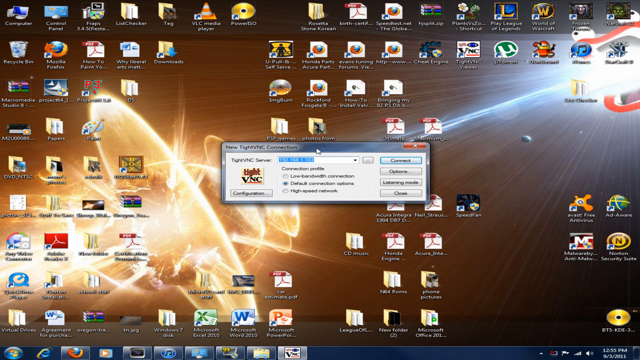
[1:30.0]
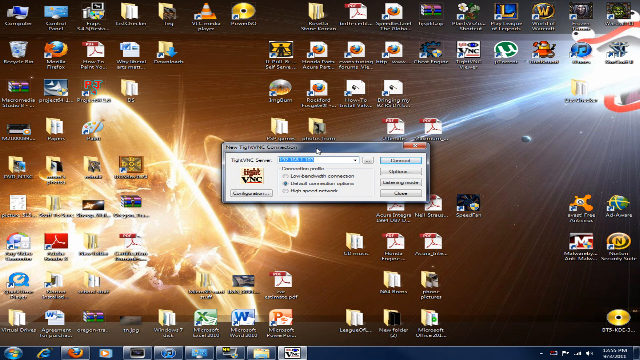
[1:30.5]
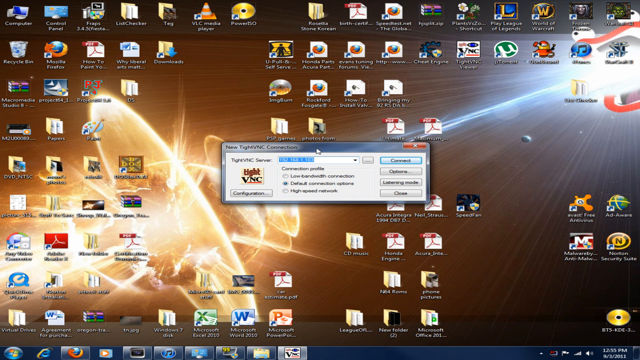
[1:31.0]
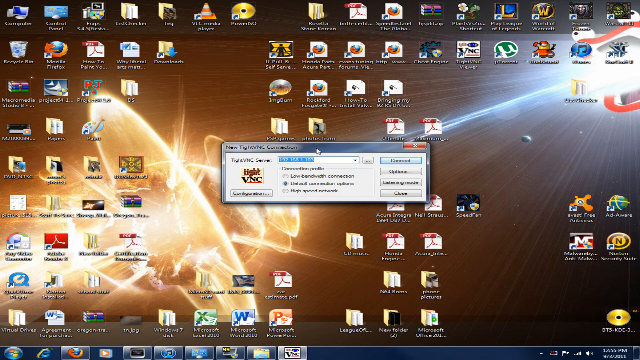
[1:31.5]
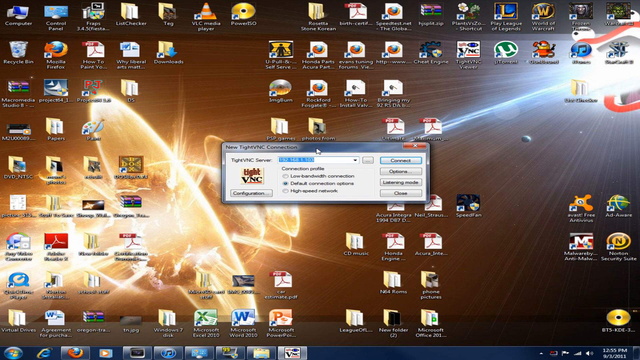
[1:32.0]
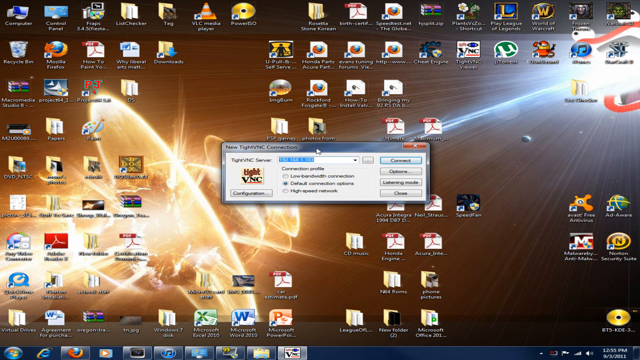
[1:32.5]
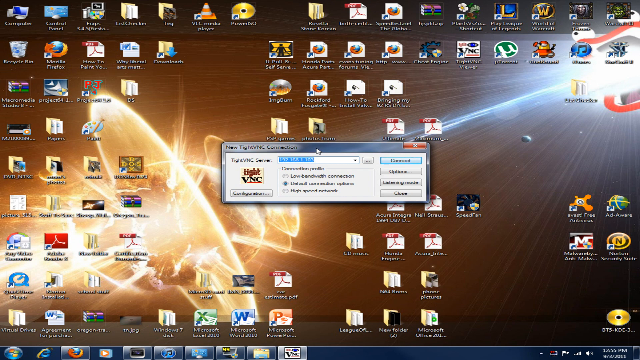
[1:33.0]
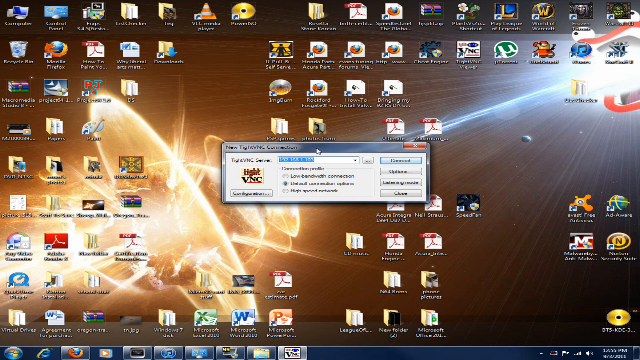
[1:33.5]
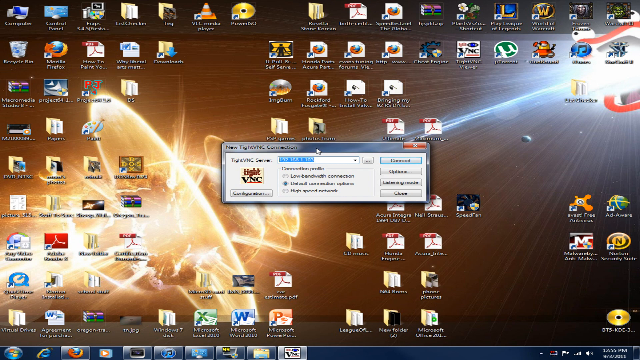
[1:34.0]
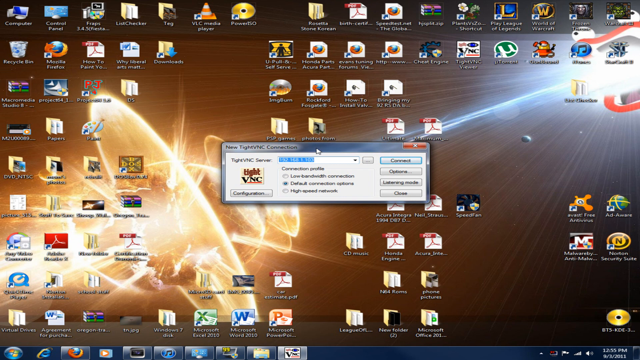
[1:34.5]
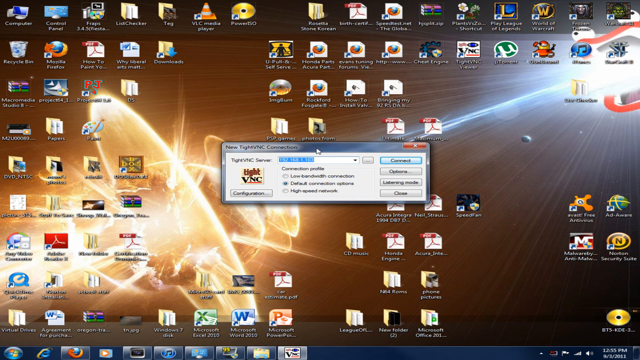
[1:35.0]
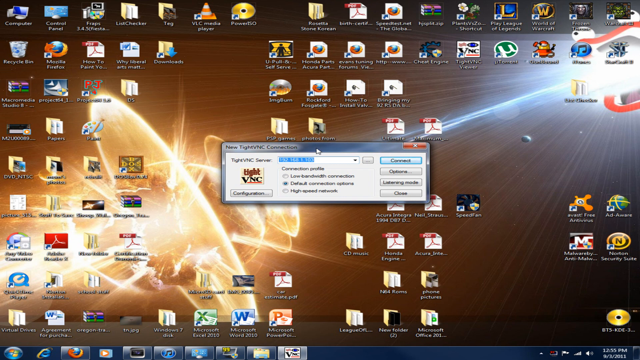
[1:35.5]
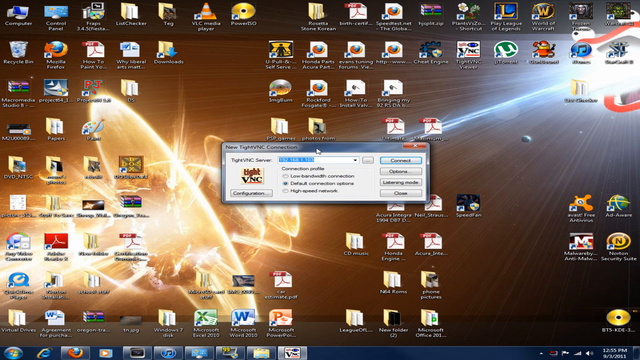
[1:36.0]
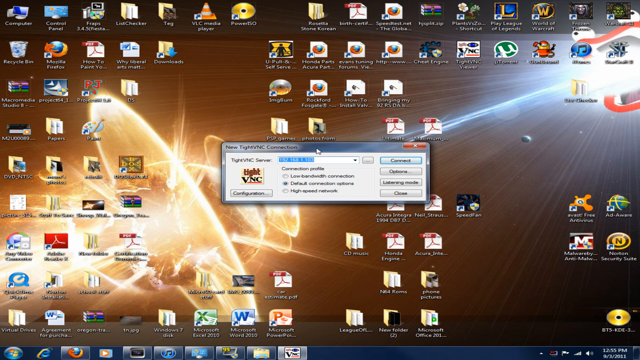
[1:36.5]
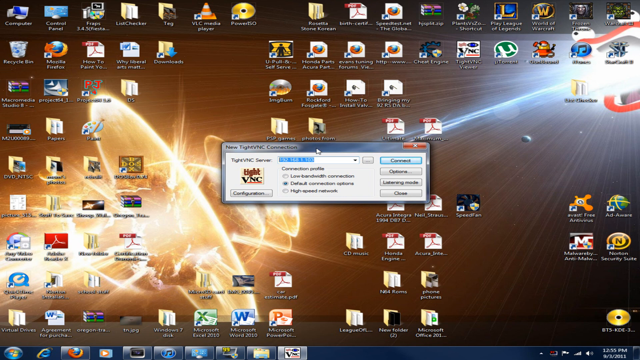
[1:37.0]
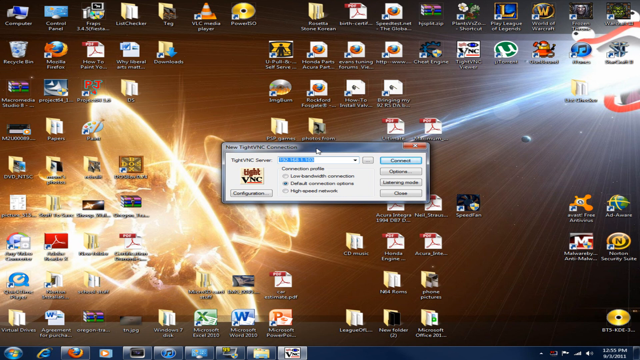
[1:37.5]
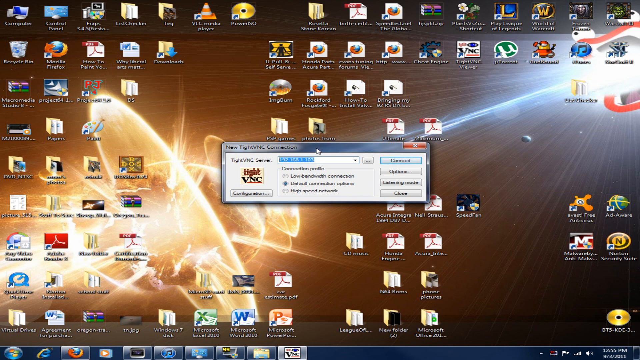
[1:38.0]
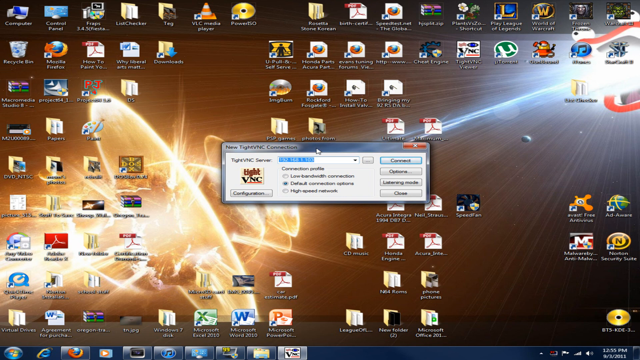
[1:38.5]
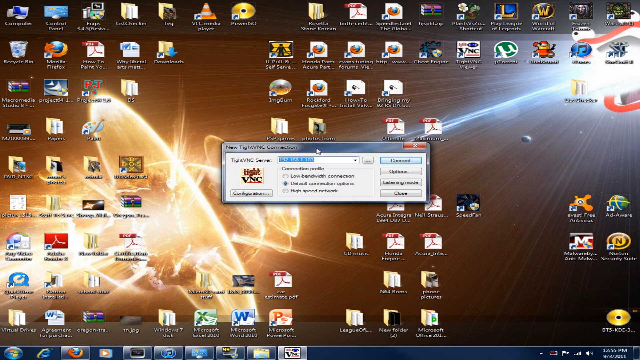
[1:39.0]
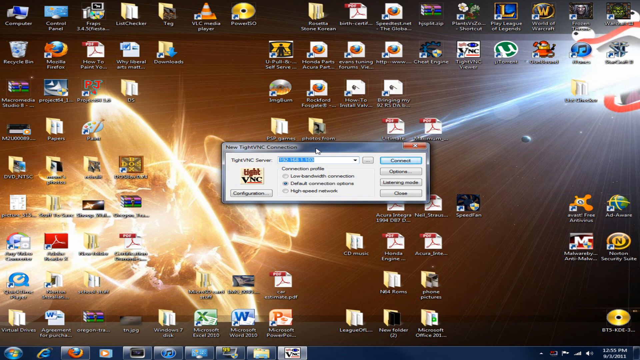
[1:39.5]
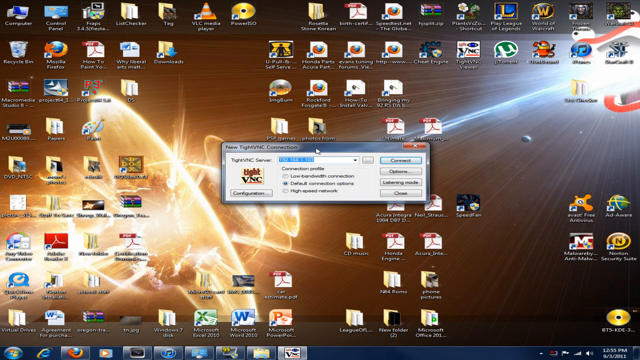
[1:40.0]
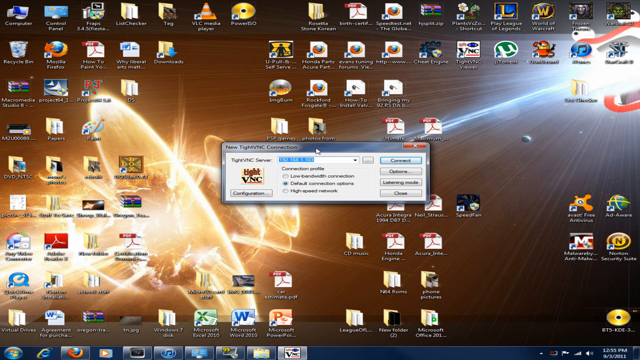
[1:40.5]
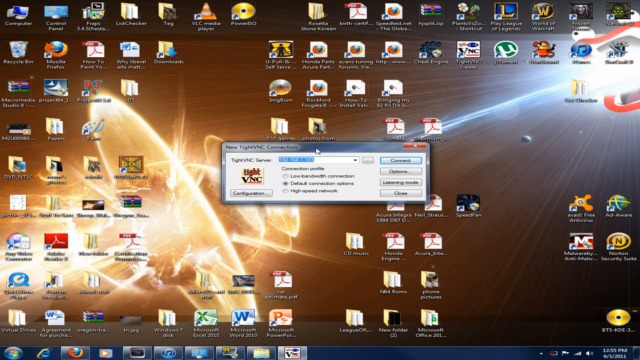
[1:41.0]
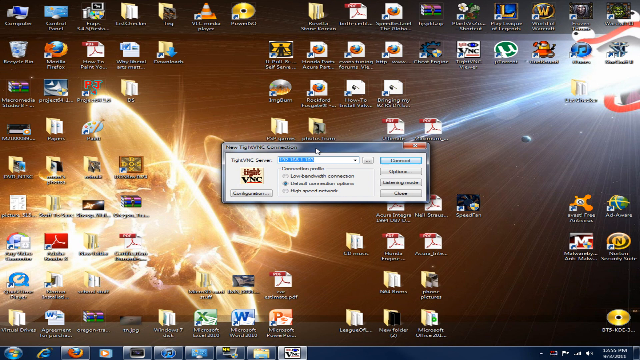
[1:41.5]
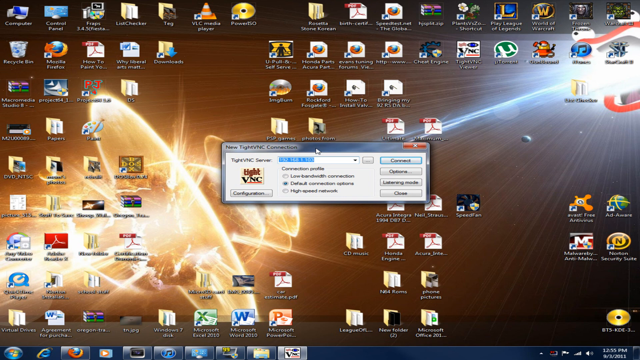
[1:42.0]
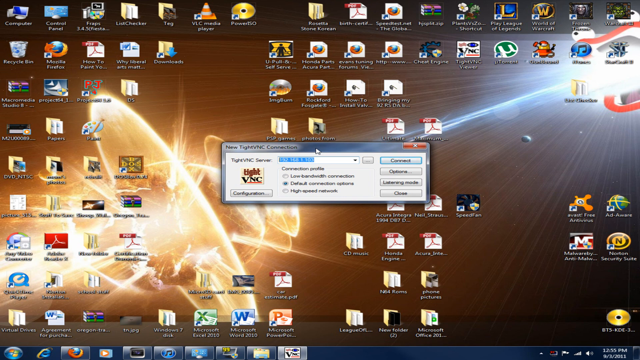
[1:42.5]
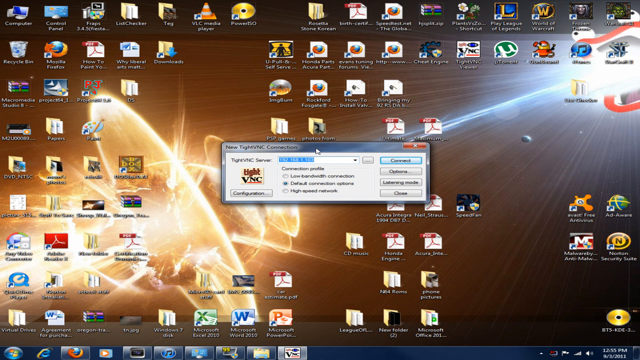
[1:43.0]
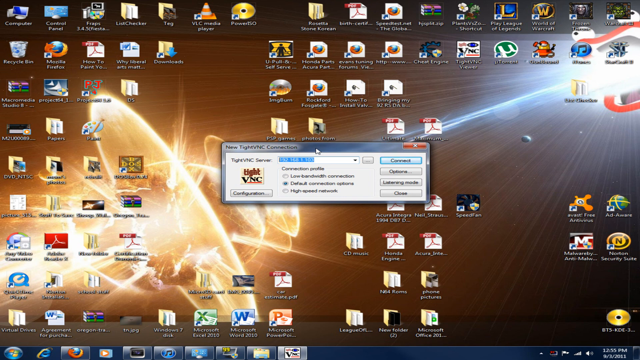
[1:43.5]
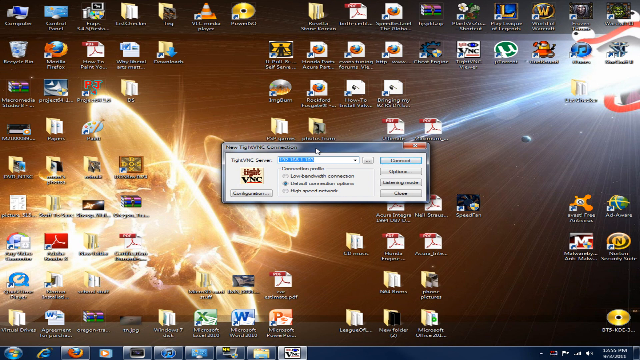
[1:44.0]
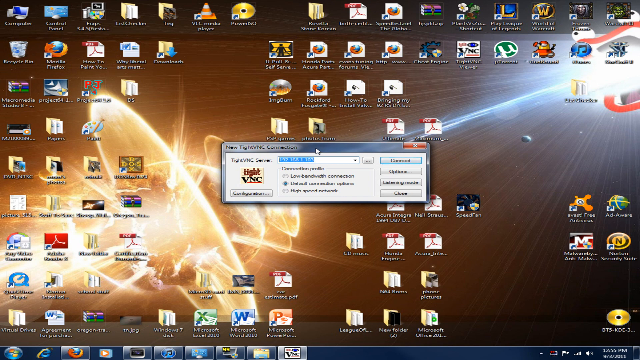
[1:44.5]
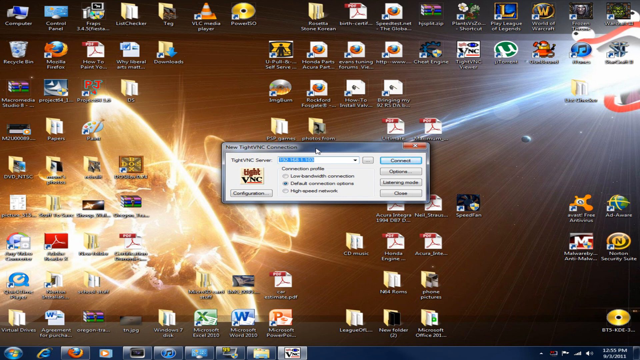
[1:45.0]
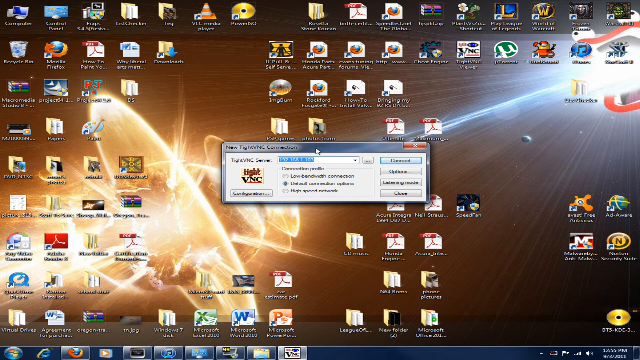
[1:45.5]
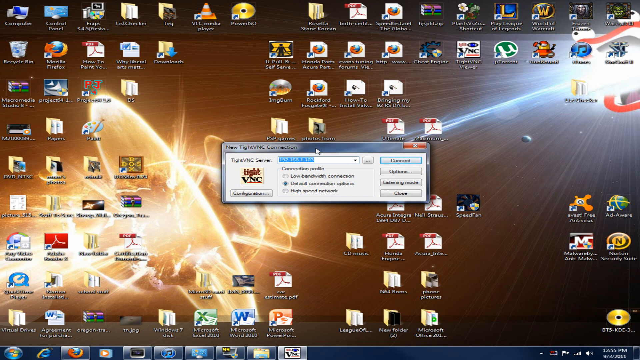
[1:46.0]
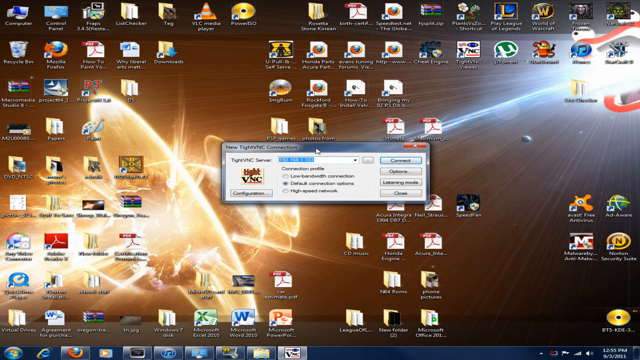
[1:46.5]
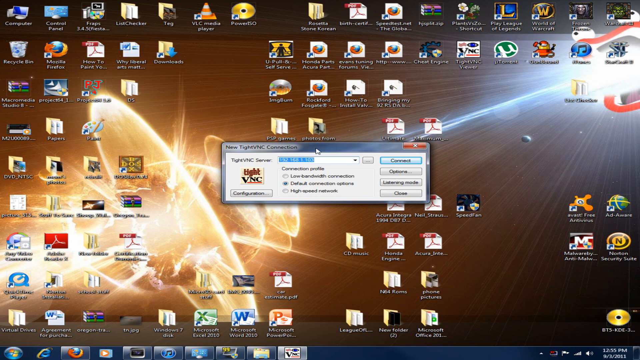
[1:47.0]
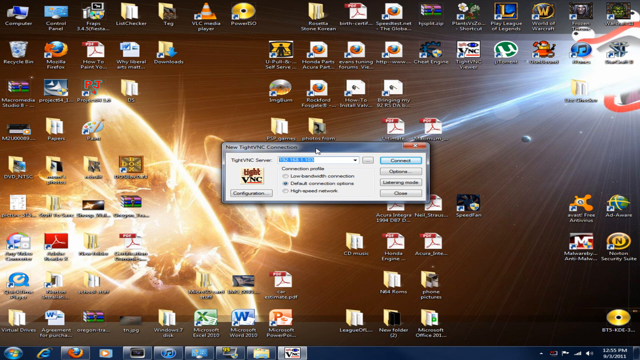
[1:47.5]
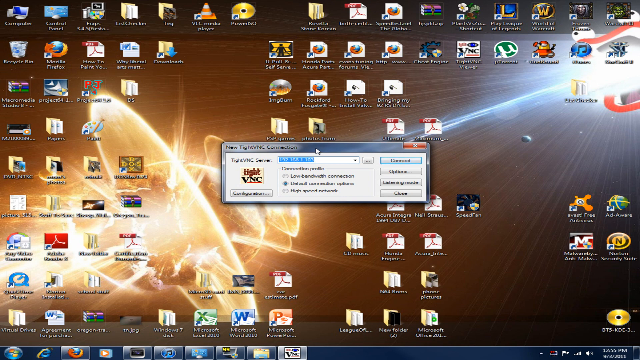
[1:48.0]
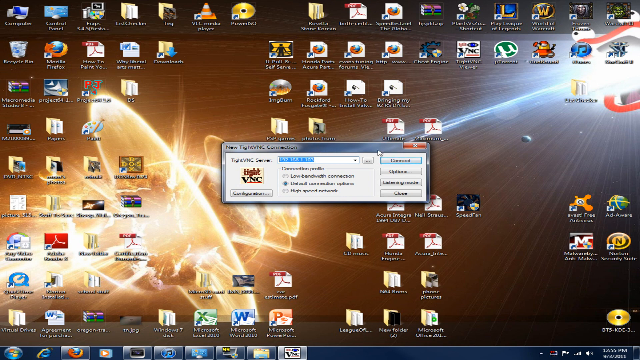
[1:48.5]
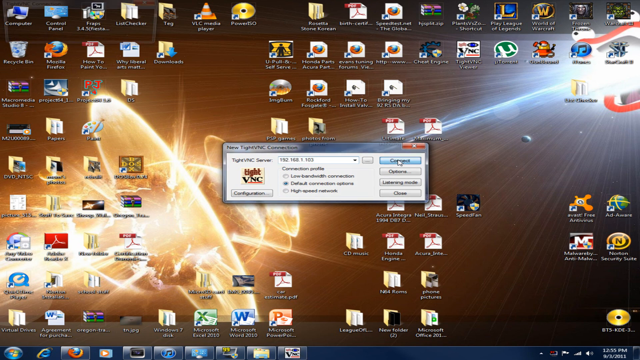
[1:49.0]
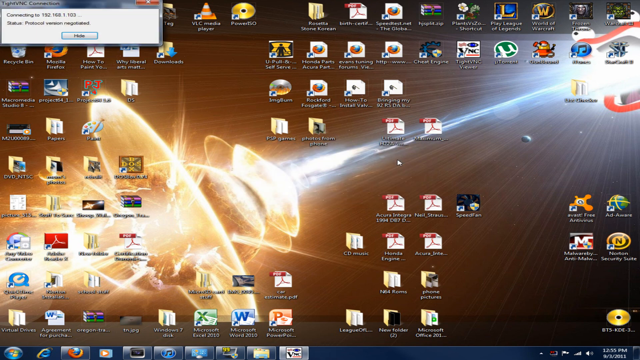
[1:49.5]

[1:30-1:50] A computer screen has an outer space wallpaper showing a planet colliding into another planet; the planets are dark brown, with bright yellow light shooting out from around them, making it look like they are exploding. There are about 50 to 60 different icons on the screen. In the middle of the screen is a small pop-up window; at its top it says "new typed VNC server". To the right of that are three options, each with a small circle before it: "low bandwidth connection", "default connection" and "high speed network". The small mouse pointer arrow is on the top of the window where it says "new typed VNC connections". On the right side of the window are four separate little buttons: "connect", "options", "labeling" and "close".